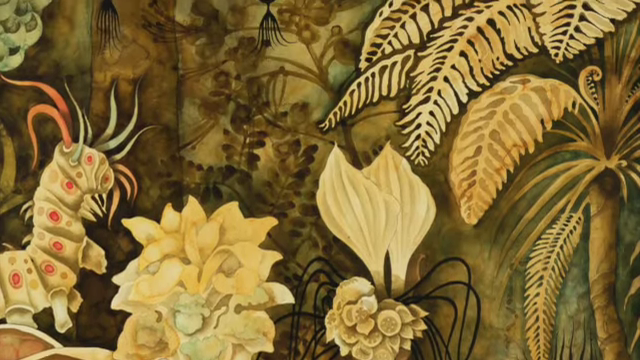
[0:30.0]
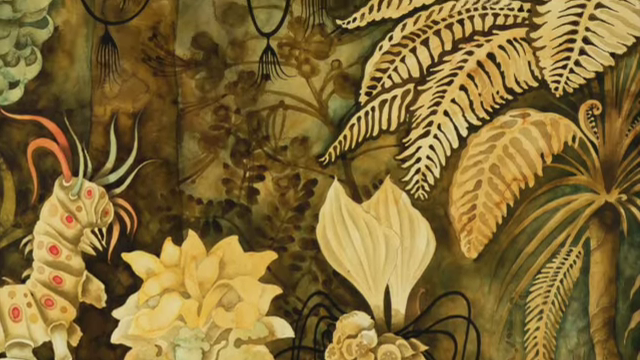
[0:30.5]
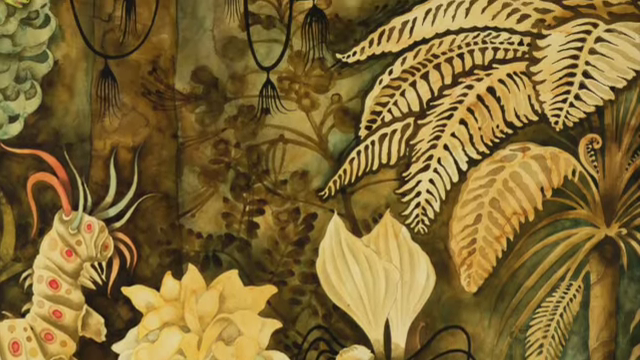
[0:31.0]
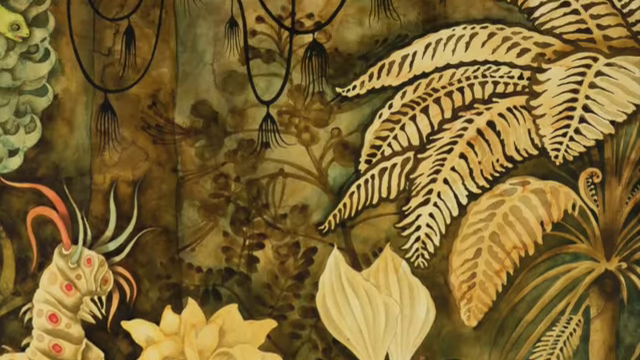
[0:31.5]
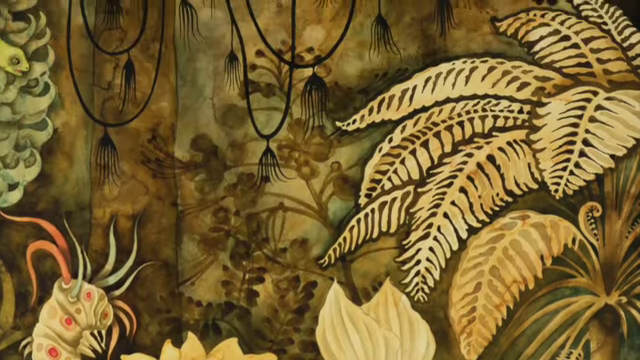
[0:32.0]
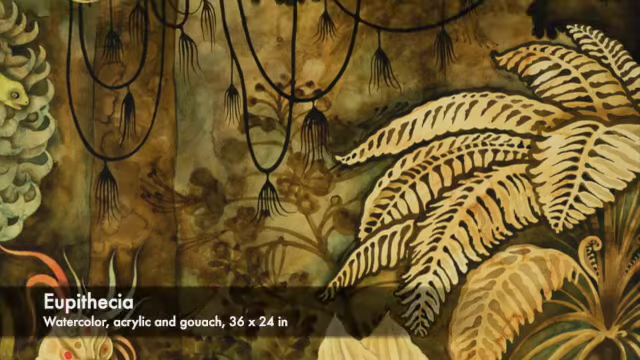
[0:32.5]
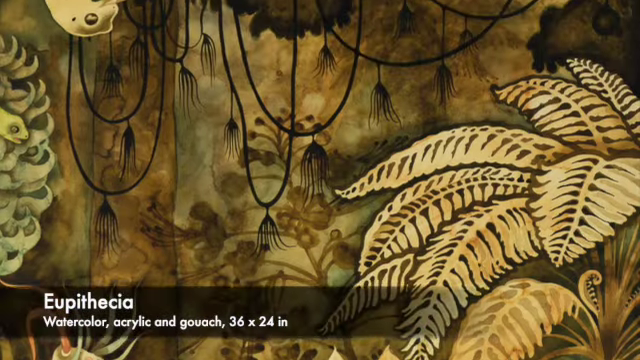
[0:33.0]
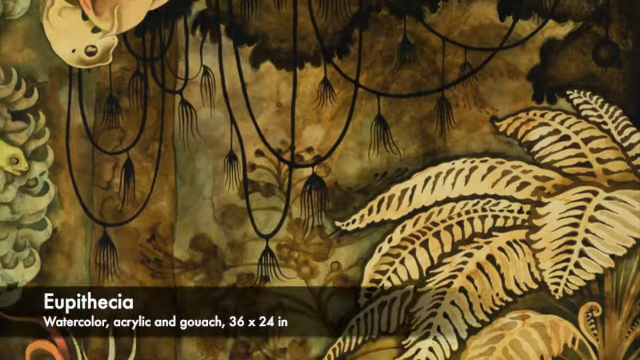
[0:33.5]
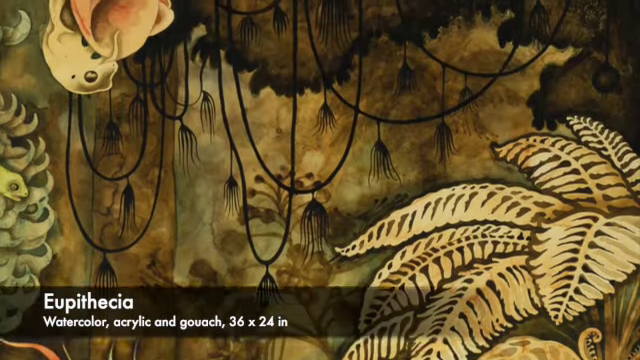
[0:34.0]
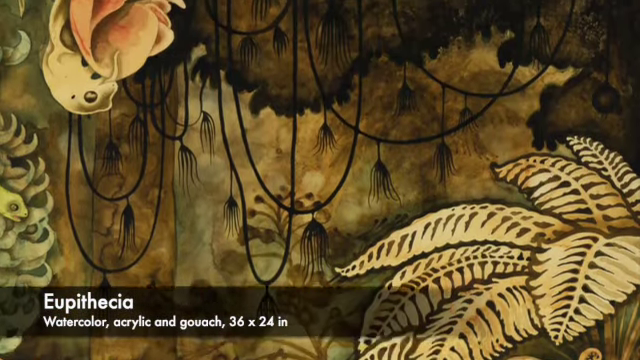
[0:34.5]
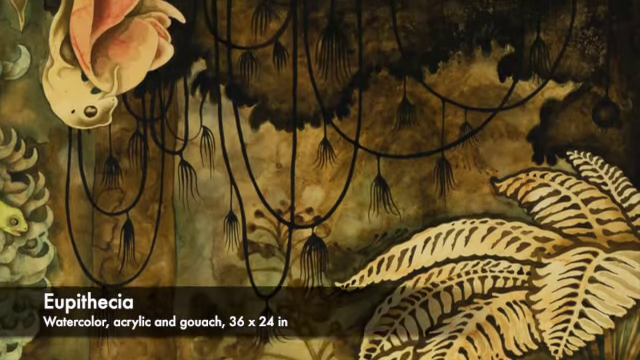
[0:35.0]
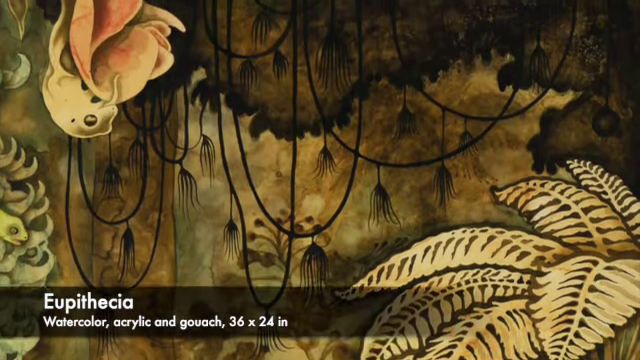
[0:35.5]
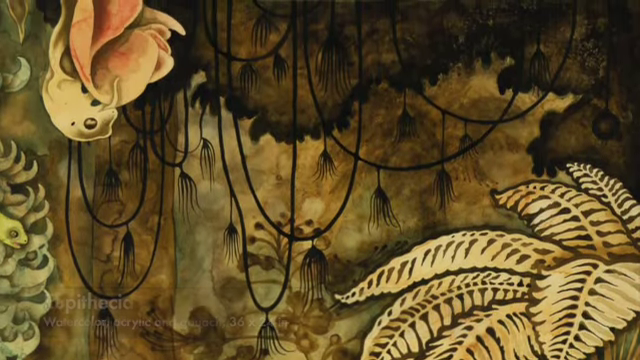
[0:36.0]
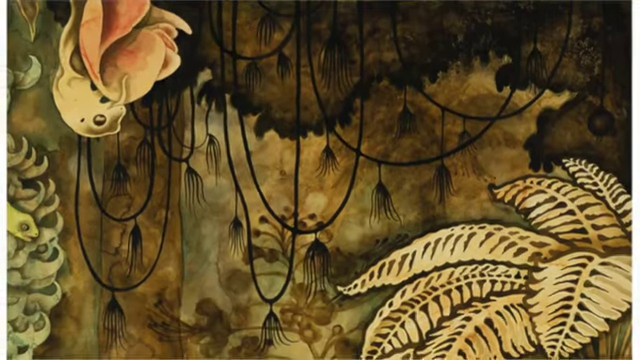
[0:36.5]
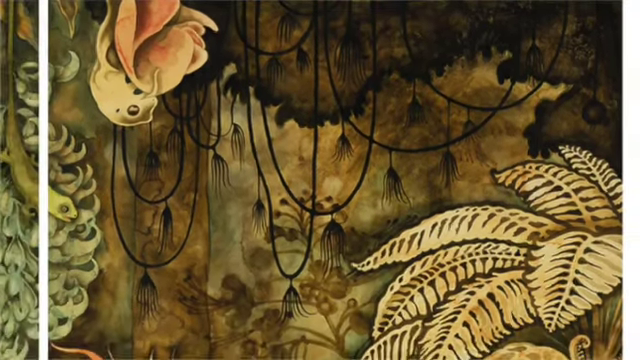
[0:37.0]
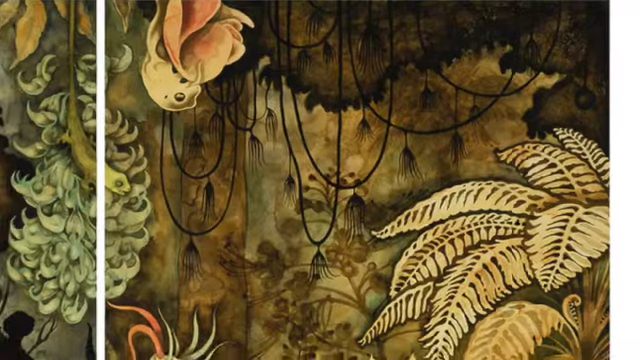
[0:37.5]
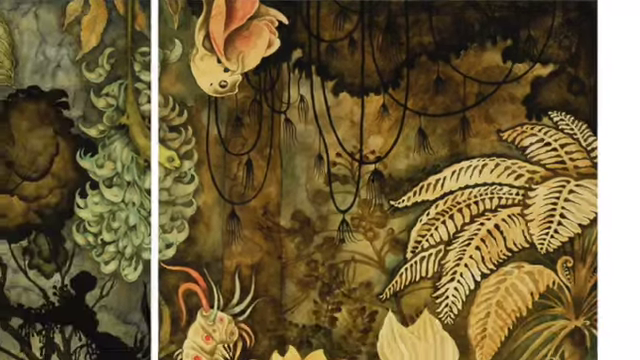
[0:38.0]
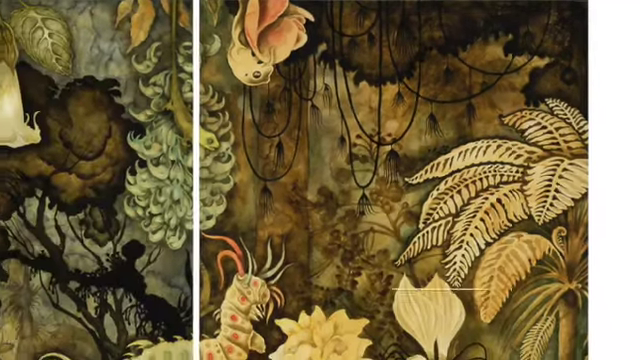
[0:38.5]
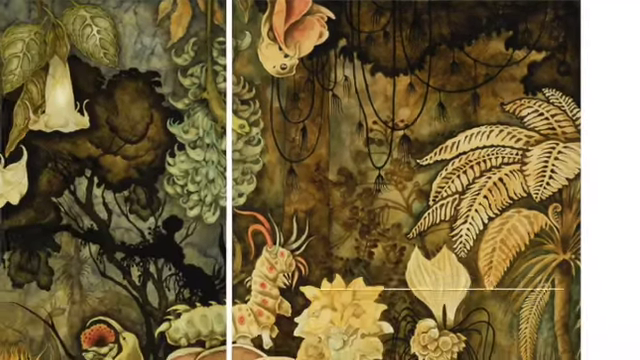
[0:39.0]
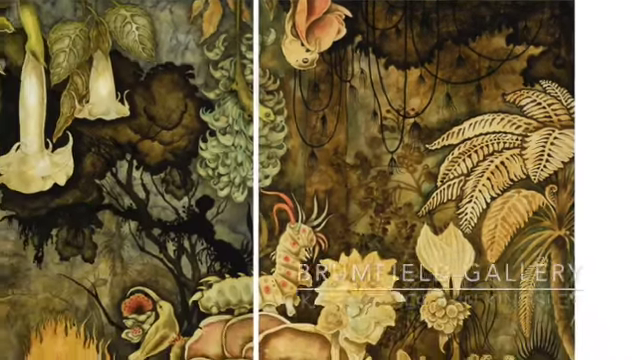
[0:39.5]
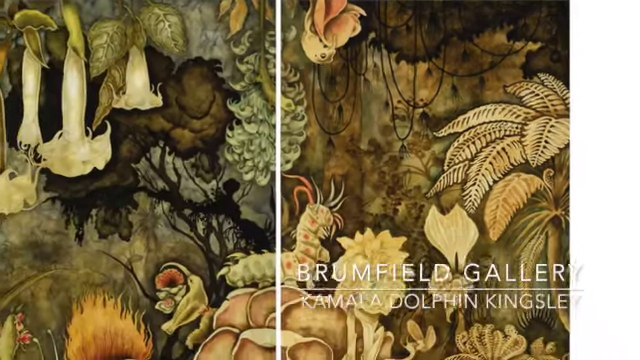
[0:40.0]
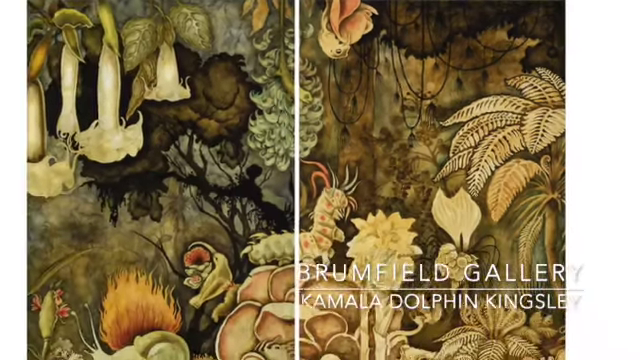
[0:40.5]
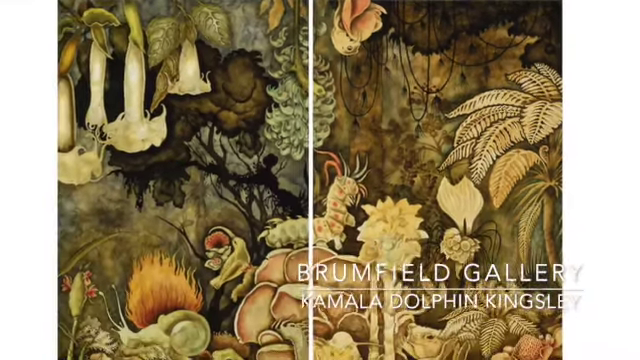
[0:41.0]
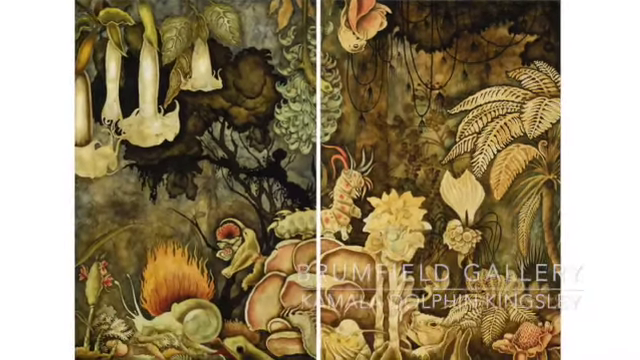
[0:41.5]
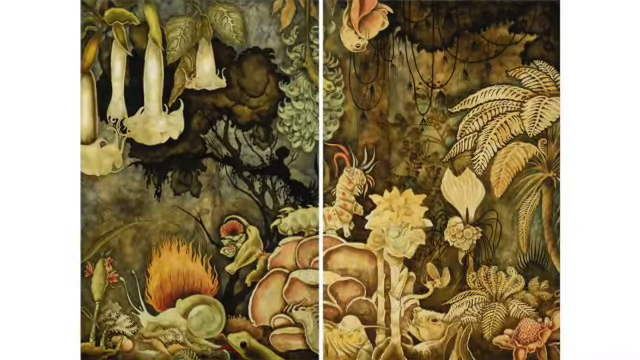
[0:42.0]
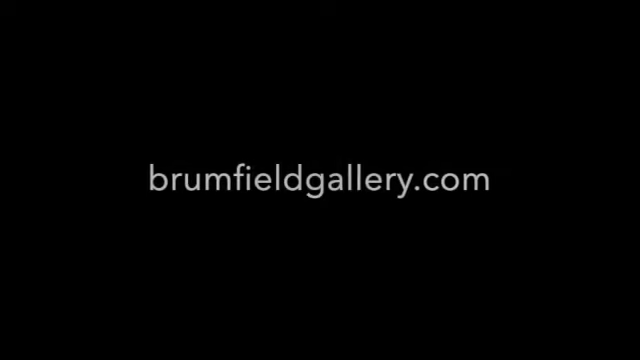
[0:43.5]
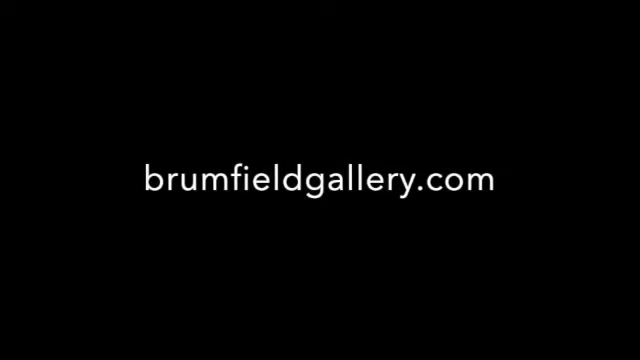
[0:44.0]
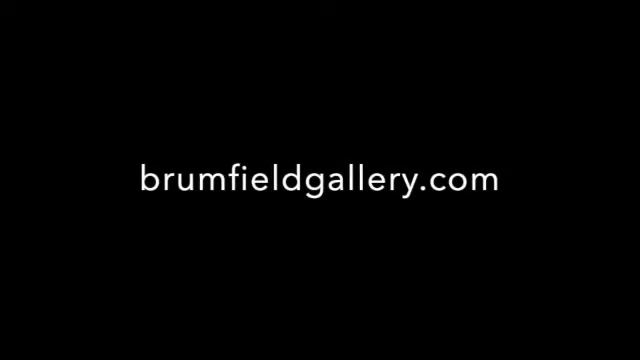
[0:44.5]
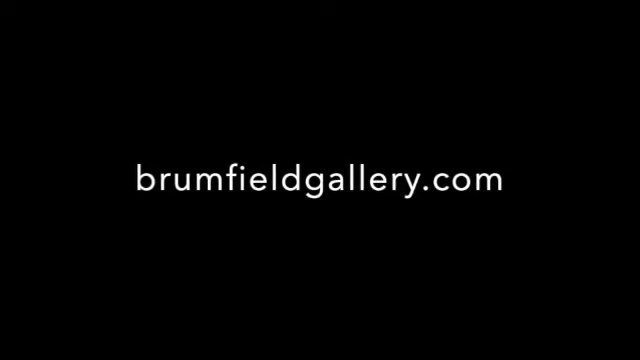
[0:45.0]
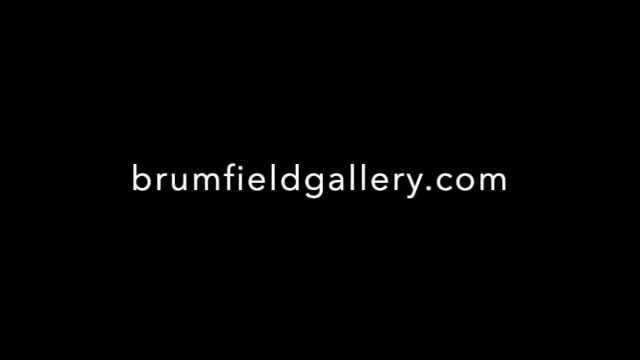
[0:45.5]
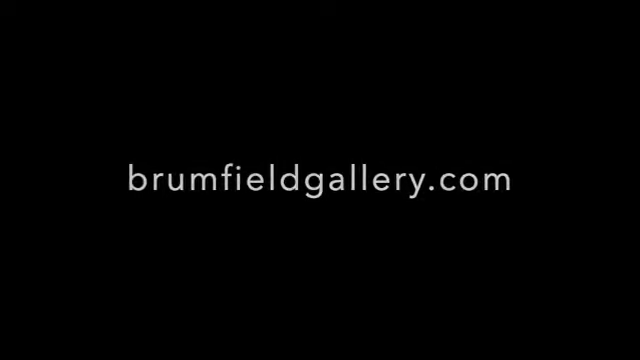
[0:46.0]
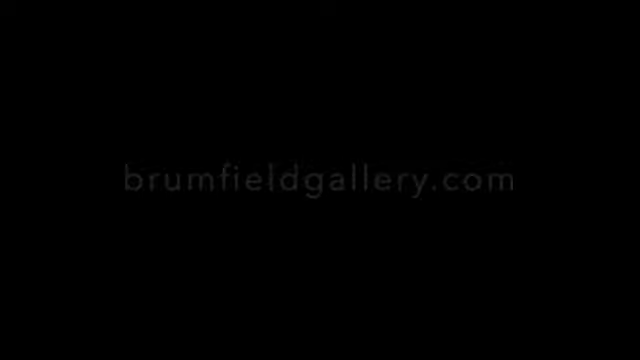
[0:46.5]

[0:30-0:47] The shot is focused somewhat in the middle of the painting, either an oil painting on canvas or a painted wall mural; it is impossible to tell because the view is zoomed completely in on the artwork and nothing around it is visible. Several plants and flowers and a caterpillar are visible, with a lot of yellowish-green musty tones. The camera pans up to more flowers, hanging branches and greenery, then pulls back to show more of the artwork, which appears to be divided in half by a plain white line running vertically down the center. A caption at the bottom reads "Brumfield Gallery, Kamala Dolphin Kingsley." The view pans back, and the work appears to be a painting placed directly on a plain white wall, or perhaps a graphic overlaid on a plain background. The screen fades to black, white text reading "brumfieldgallery.com" emerges, and it fades to black.